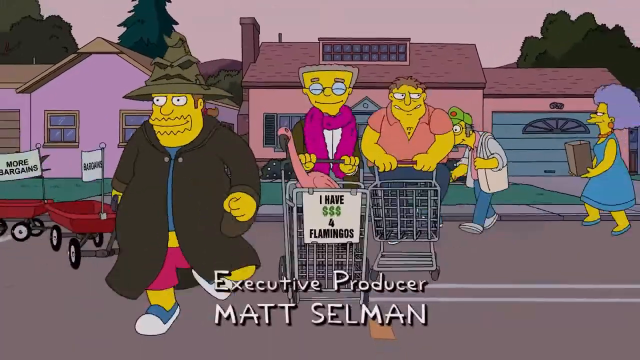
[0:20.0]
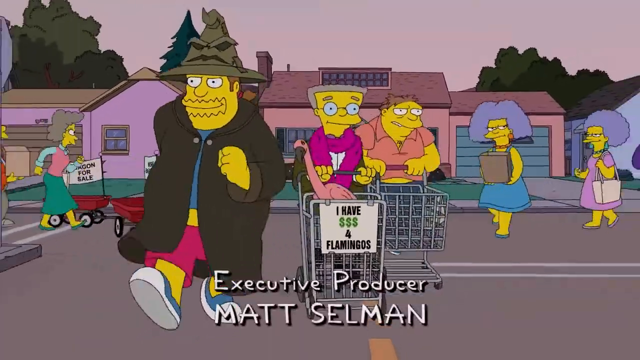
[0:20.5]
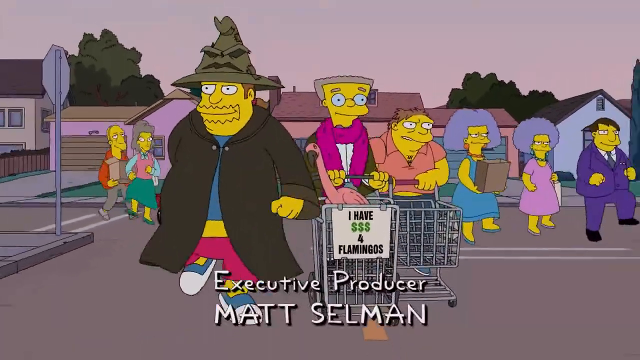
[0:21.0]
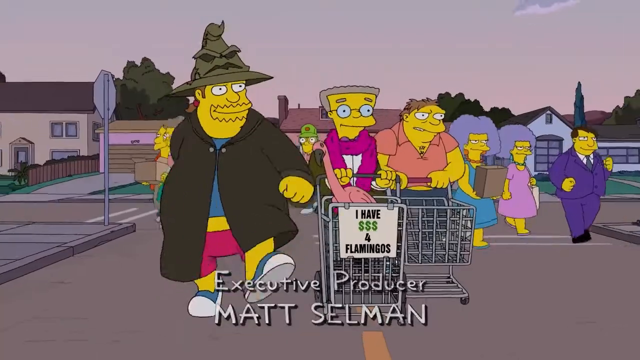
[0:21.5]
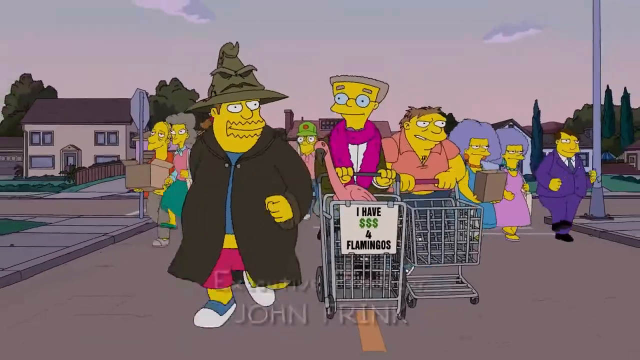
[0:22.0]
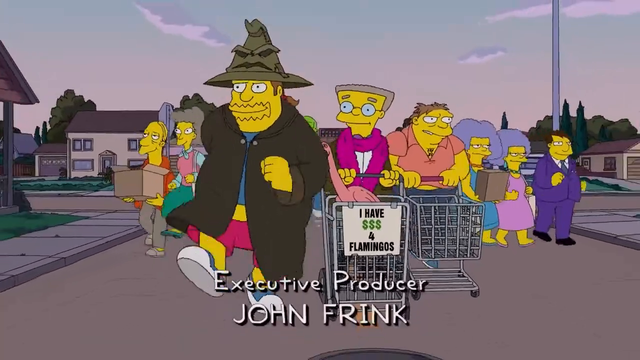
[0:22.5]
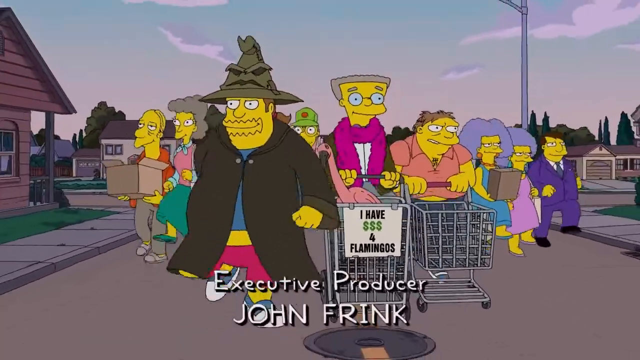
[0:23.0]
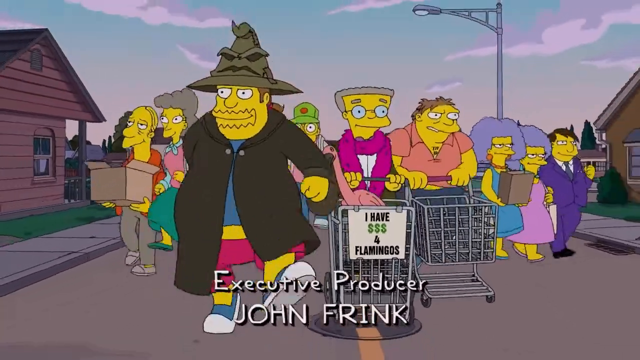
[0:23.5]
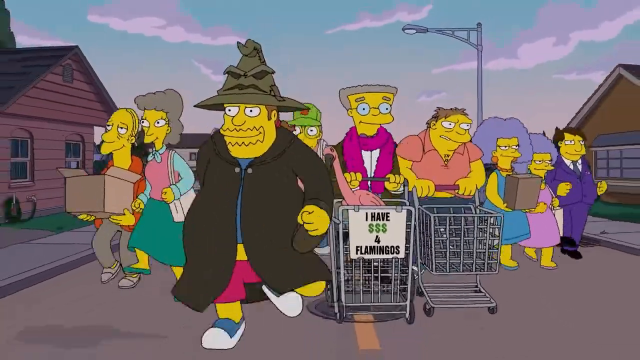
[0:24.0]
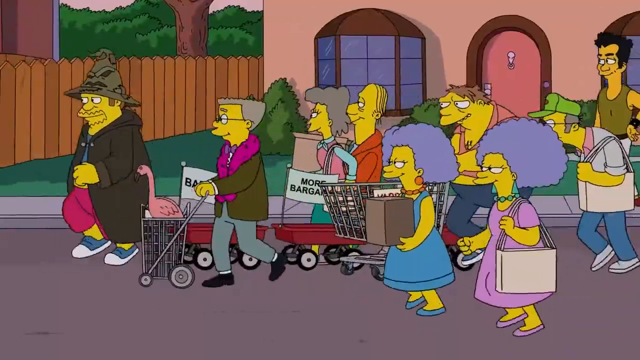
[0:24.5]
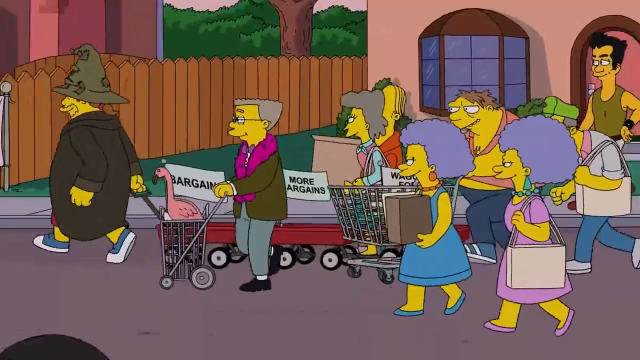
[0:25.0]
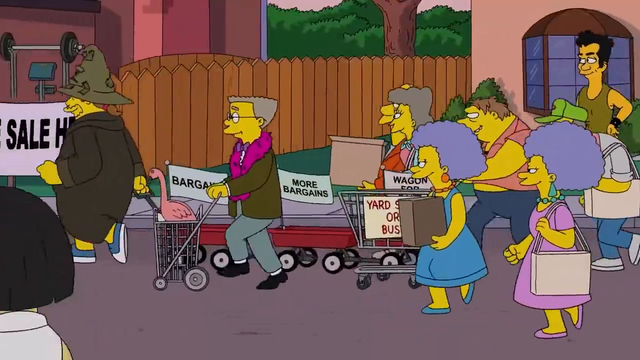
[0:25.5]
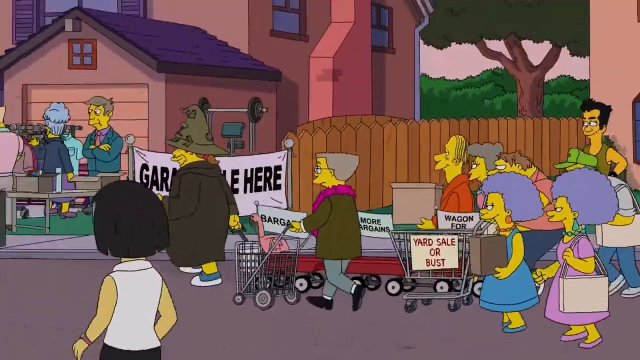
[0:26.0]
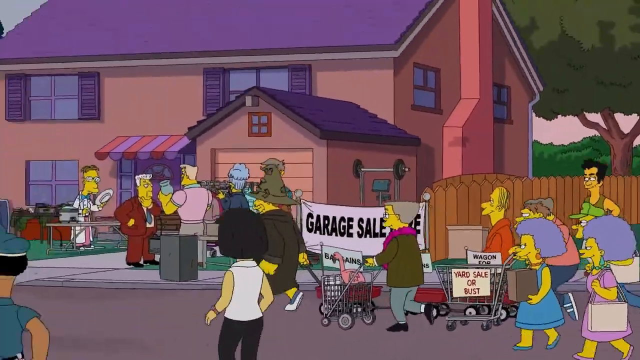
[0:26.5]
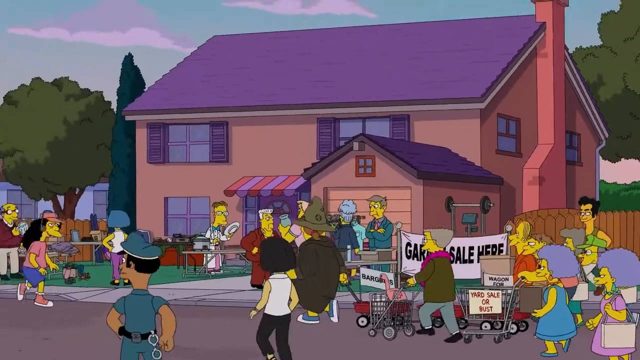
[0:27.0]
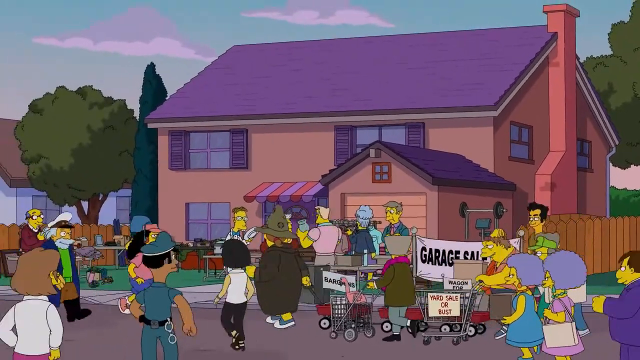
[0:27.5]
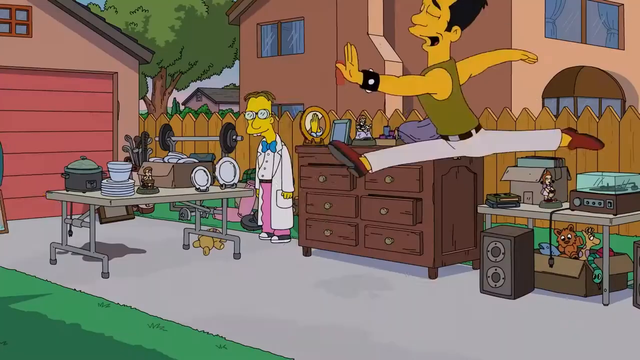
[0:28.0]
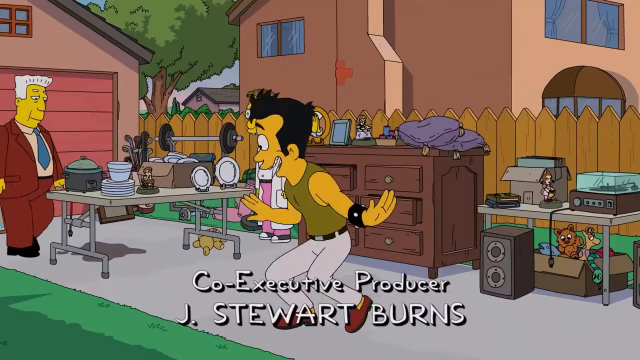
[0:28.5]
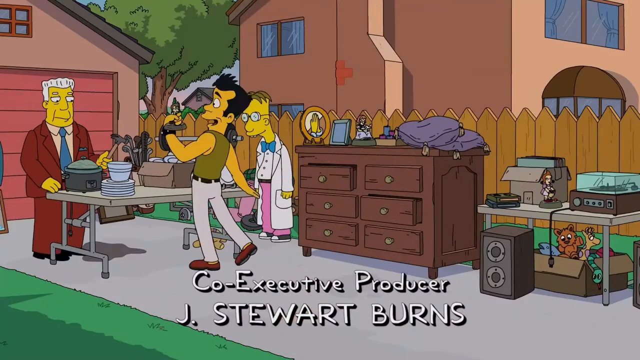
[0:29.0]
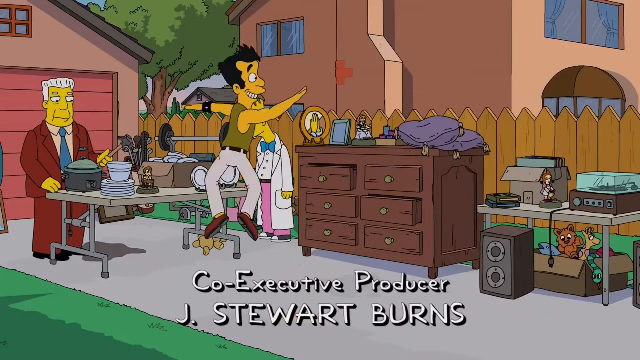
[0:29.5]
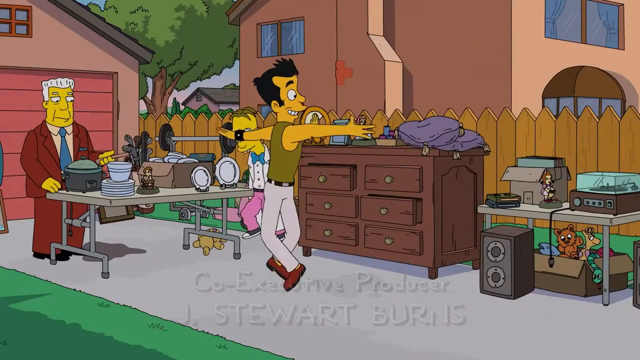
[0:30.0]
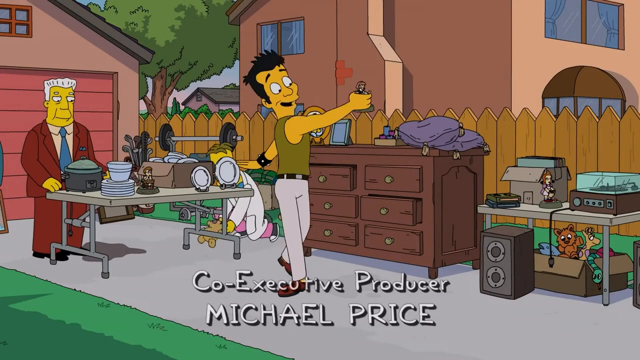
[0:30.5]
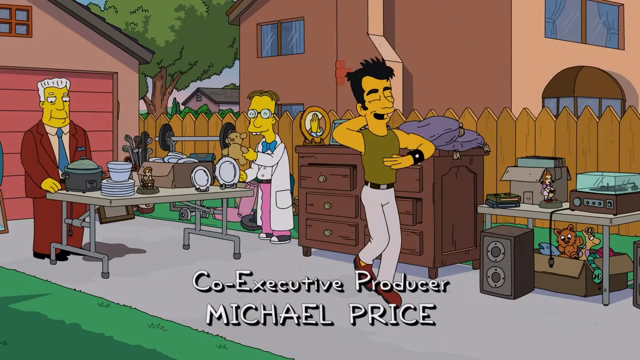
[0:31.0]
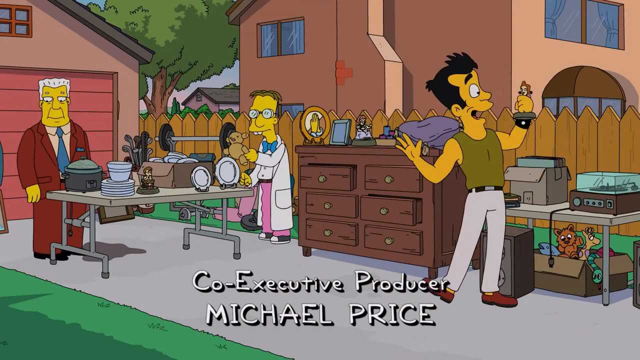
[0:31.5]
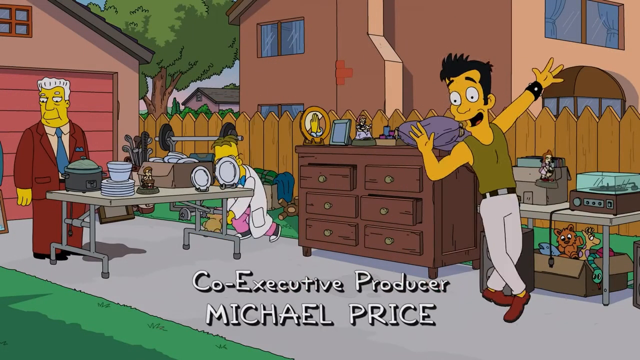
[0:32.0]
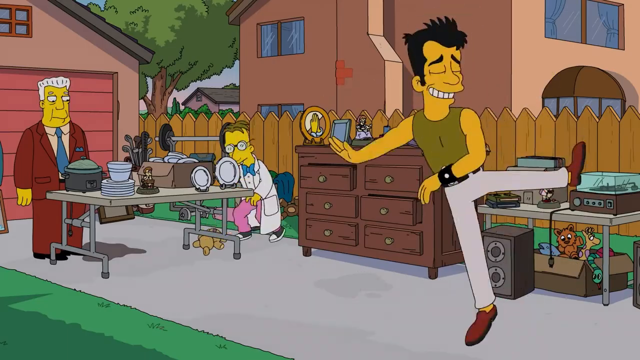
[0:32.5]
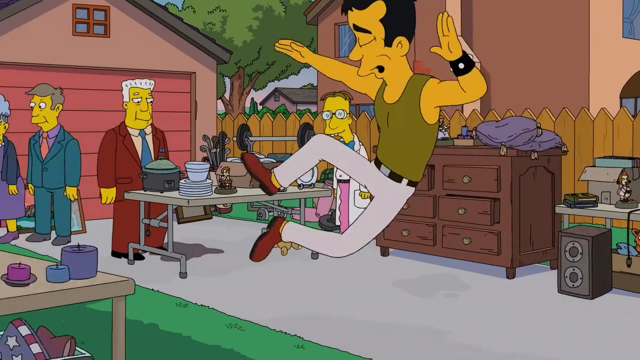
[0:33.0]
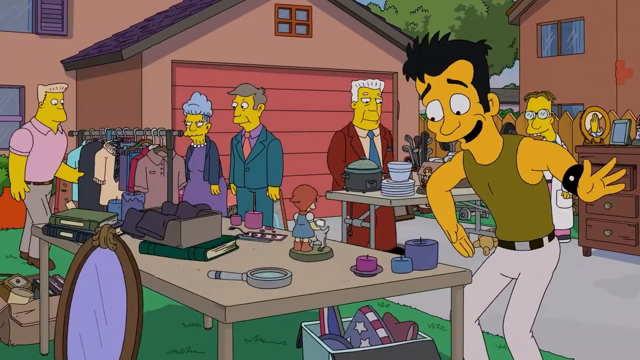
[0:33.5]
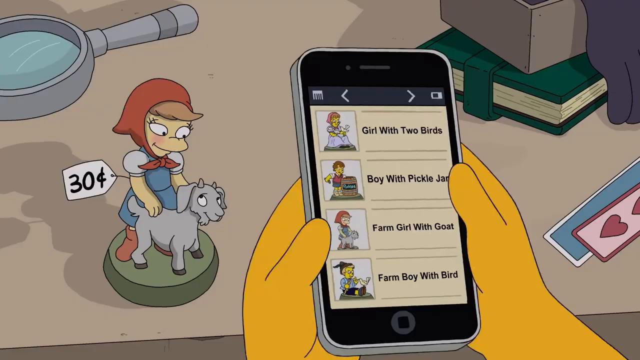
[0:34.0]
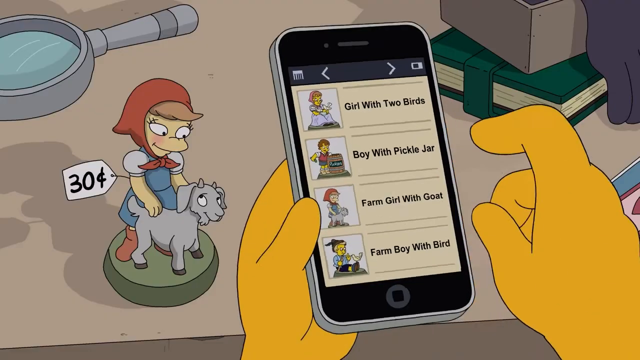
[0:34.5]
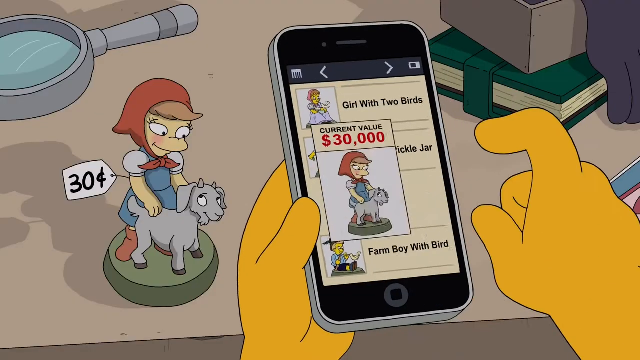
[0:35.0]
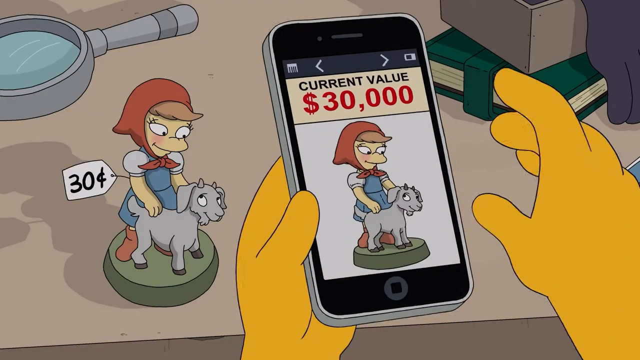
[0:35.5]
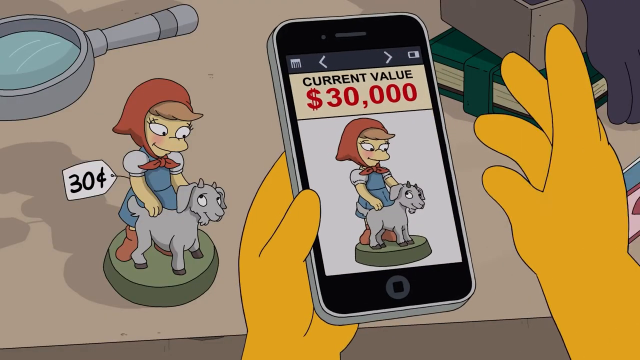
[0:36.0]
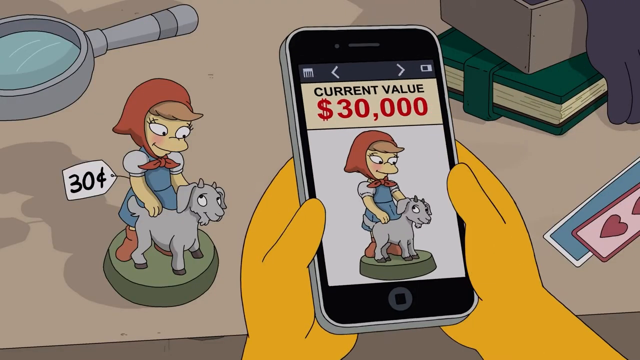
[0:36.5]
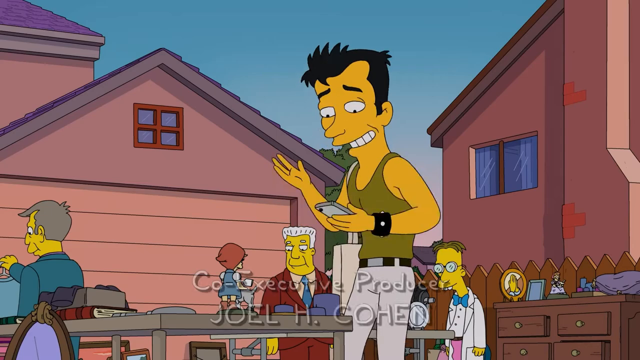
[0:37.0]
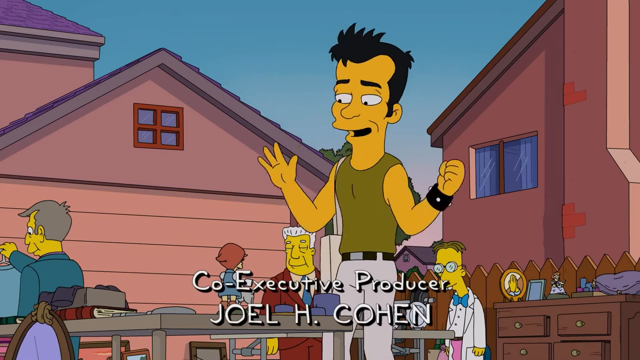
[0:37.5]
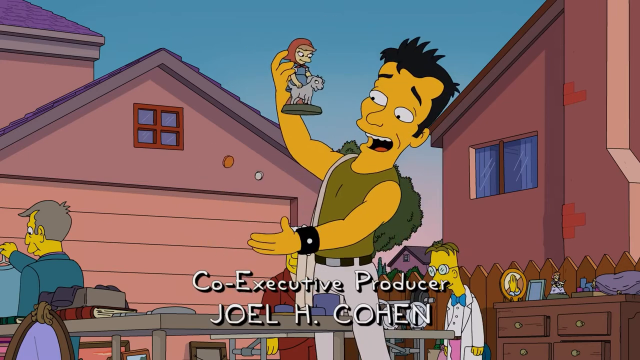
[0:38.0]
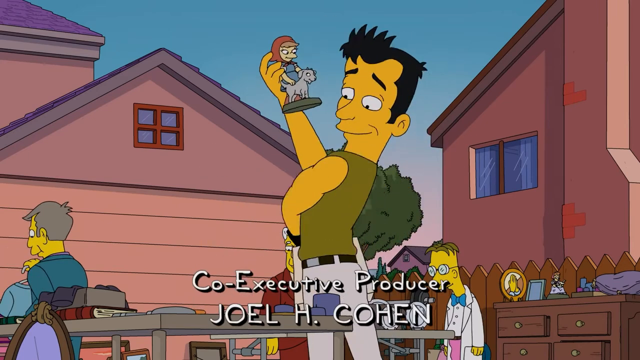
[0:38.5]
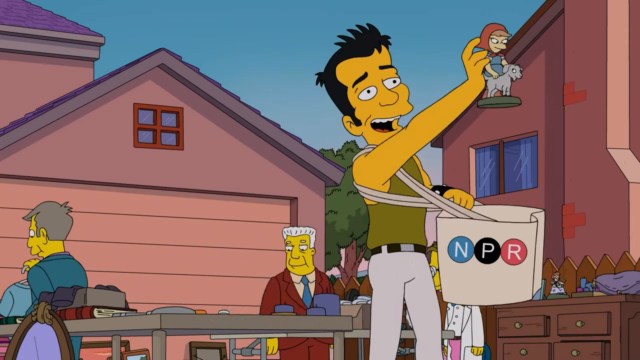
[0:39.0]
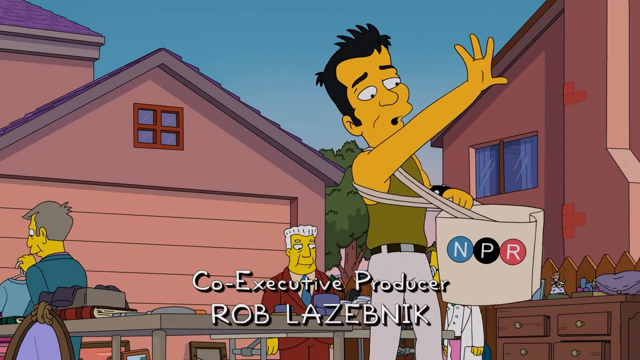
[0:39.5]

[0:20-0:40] The man wearing the sorting hat, Mr. Smithers, Barney and some other people walk down the street, all carrying some kind of basket or something to carry things in. Text reads "exclusive producer Matt Selman." The group walks down the street as if going somewhere, carrying boxes and baskets, and they walk right to a house with a sign that says "garage sale here." A man jumps over a table, looking super happy, and dances around picking up different objects as he goes. Text reads "co exclusive producer Michael Price." A scientist in the back picks up a teddy bear and puts it down. The man looks at his phone and sees a farm girl with a goat marked "30 cents" with a current value of "$30,000," so he takes it and puts it in his bag.